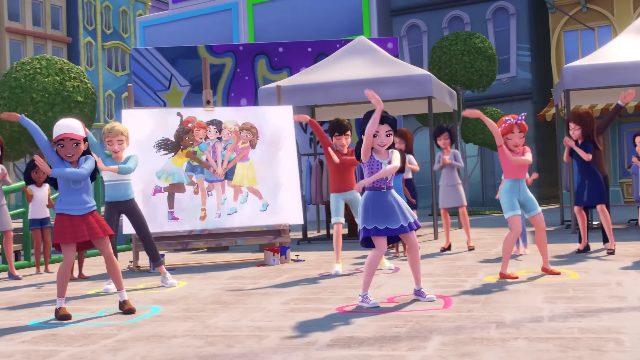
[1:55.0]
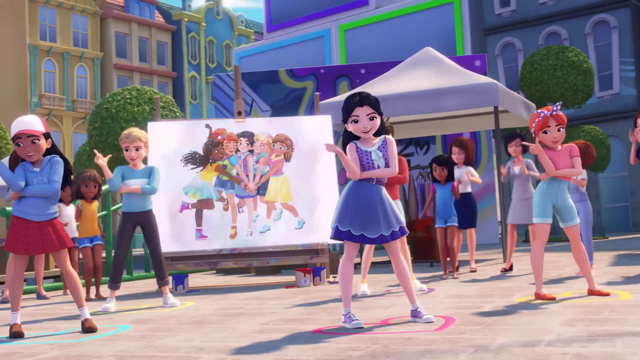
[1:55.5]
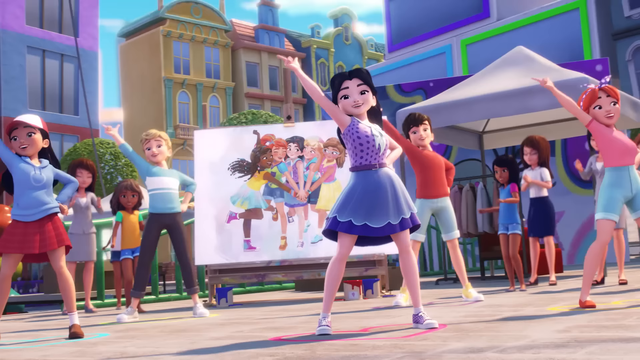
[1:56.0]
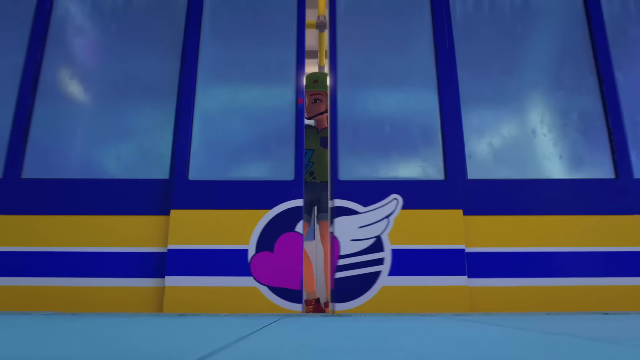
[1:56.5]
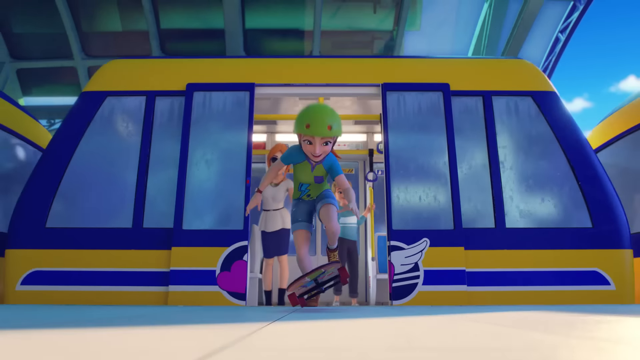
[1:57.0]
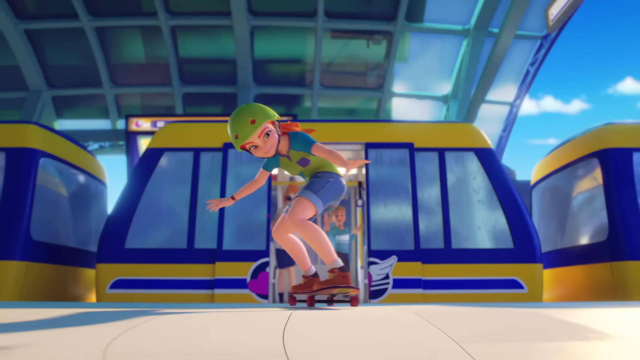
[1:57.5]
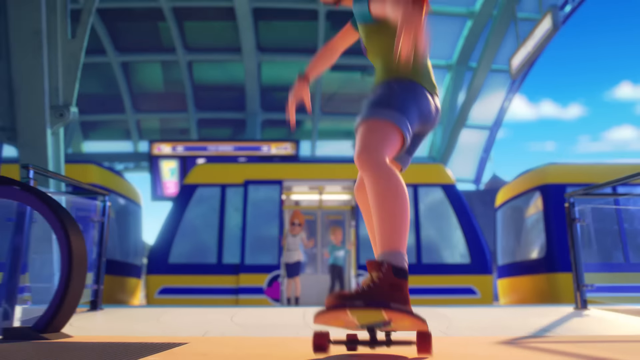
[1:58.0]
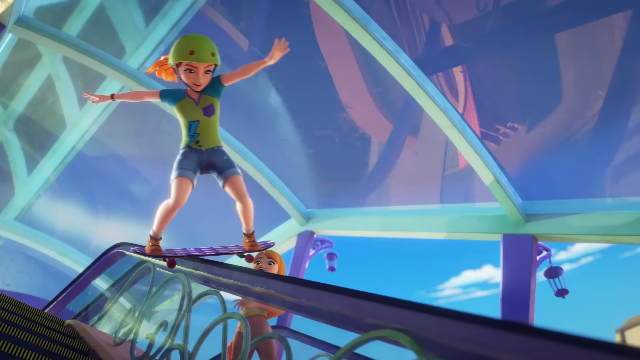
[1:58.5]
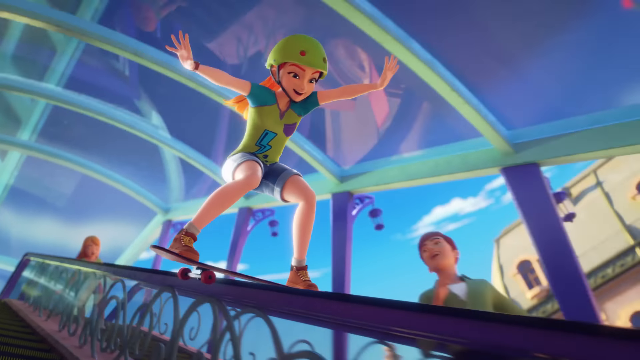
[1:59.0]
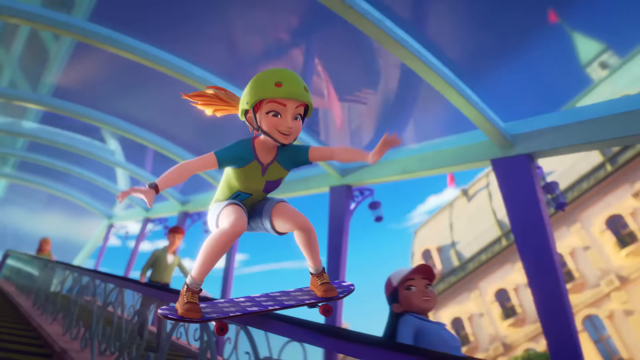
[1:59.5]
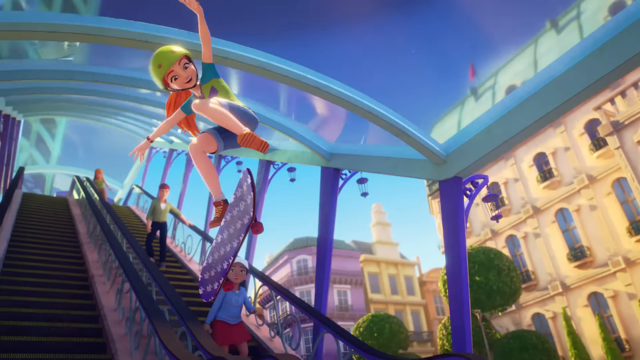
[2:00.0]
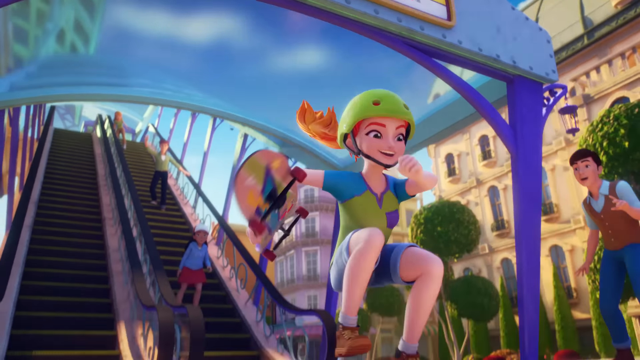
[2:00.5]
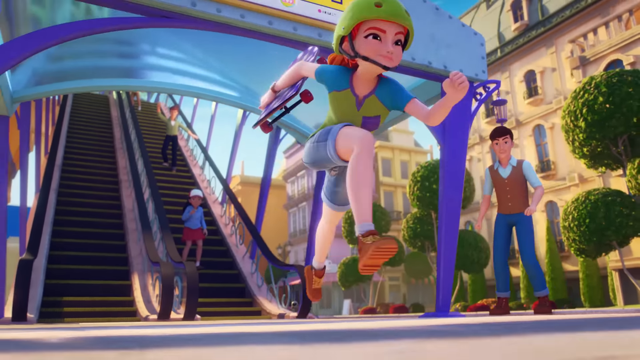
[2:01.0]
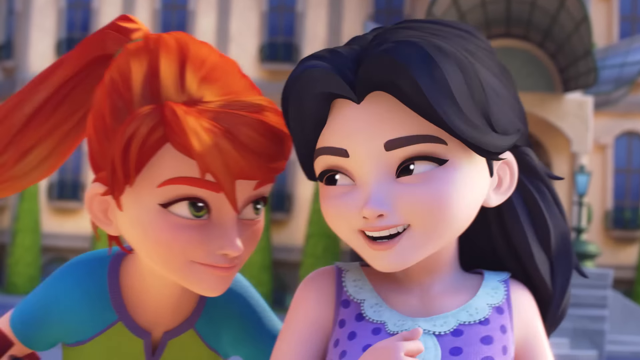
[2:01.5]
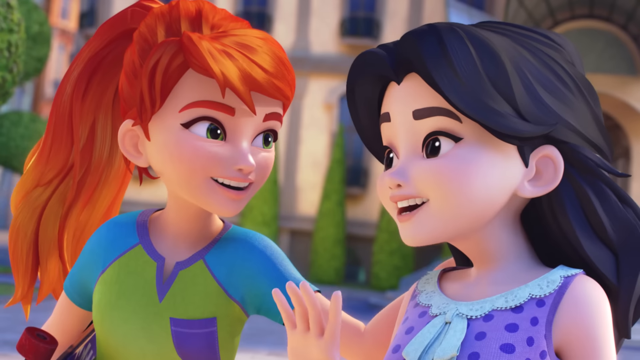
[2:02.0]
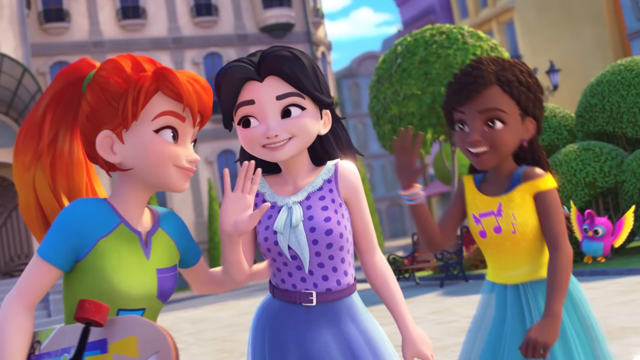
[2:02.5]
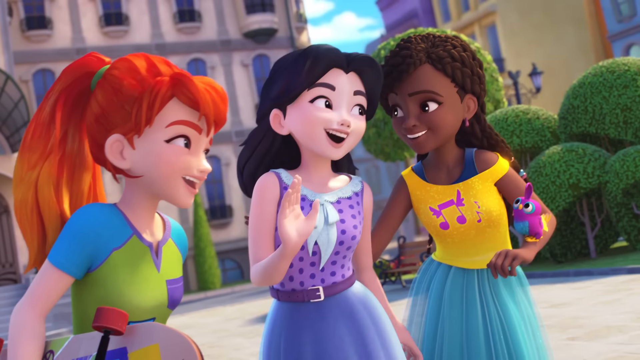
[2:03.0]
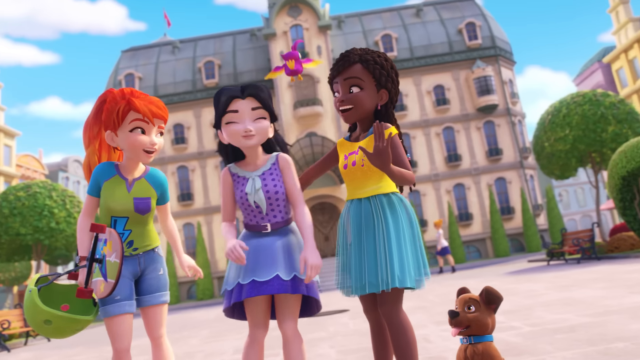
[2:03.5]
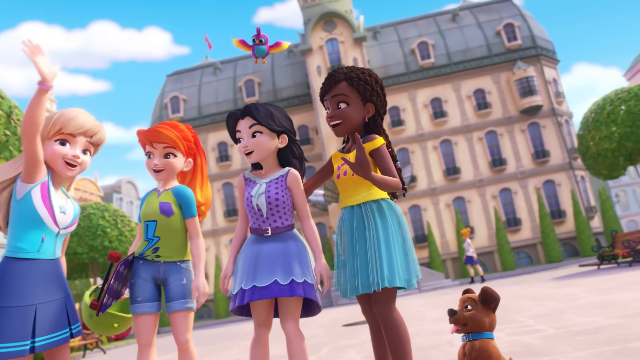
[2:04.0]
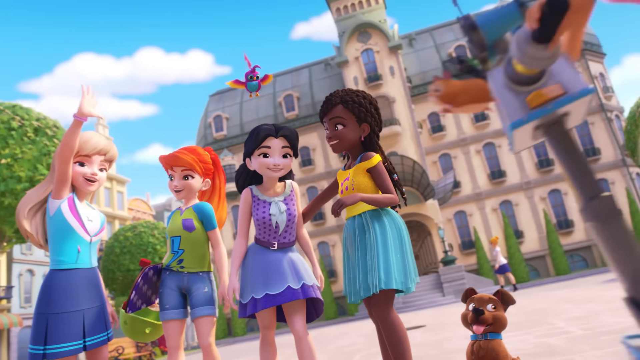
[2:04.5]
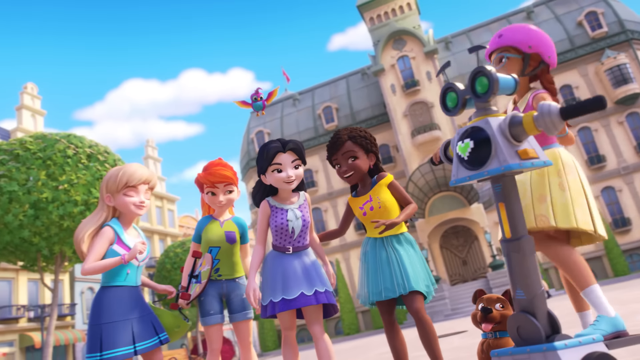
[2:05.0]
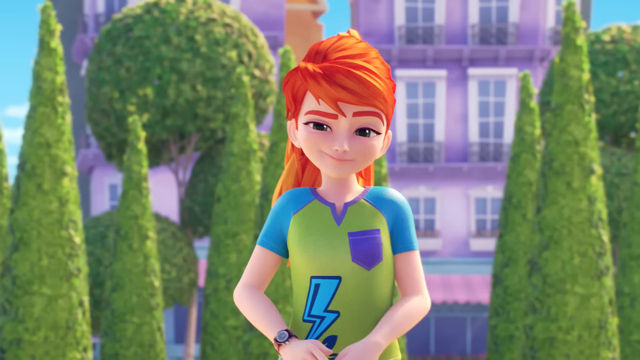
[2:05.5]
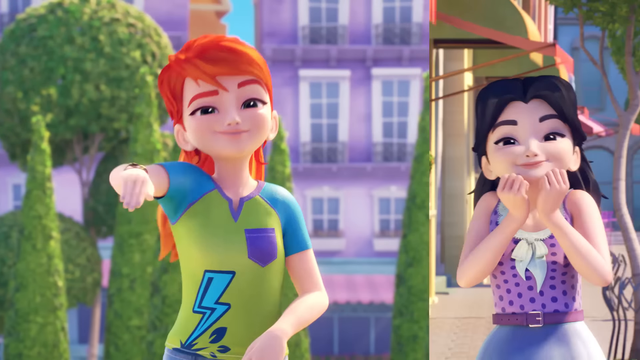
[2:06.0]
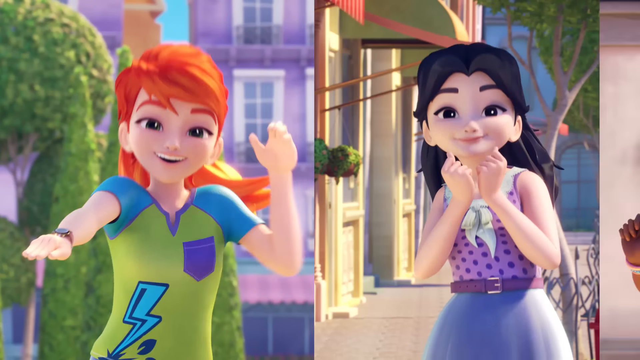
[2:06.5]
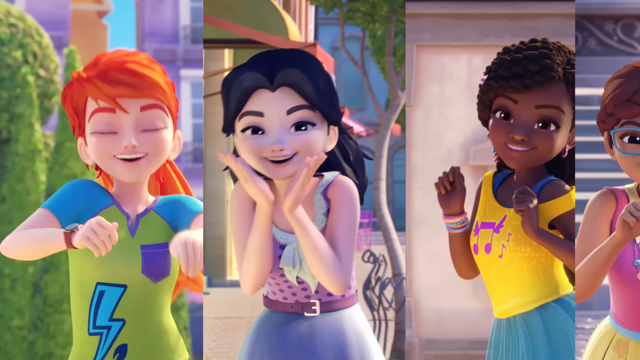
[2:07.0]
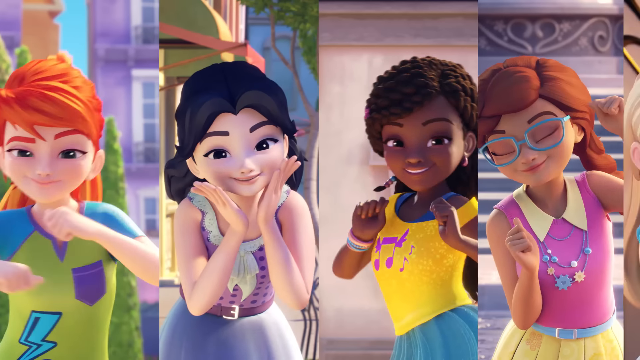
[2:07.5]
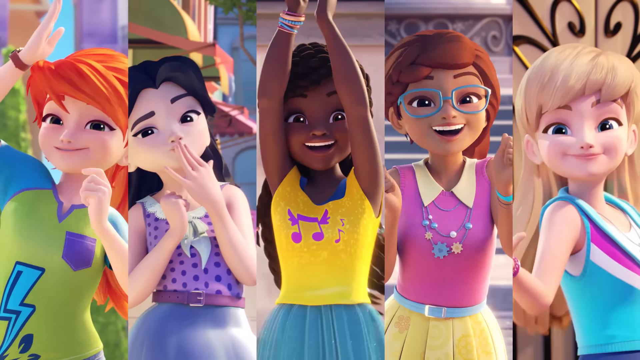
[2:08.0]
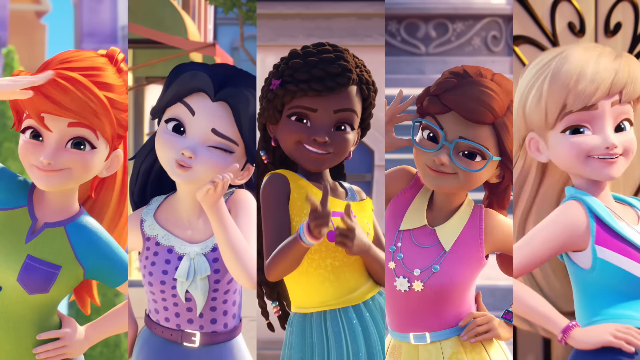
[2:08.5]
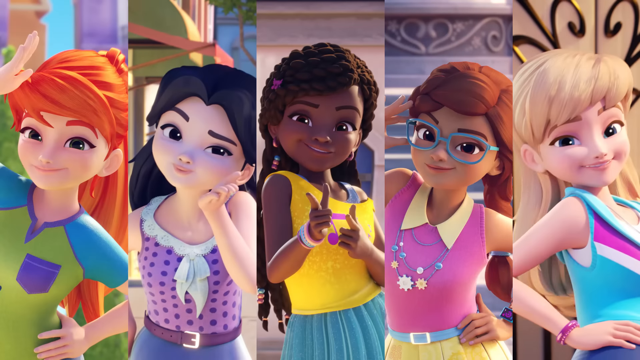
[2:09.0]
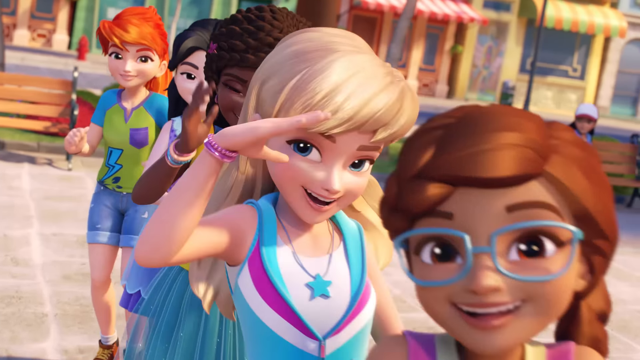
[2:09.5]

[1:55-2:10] Mia arrives at the main station in town, jumps out with her skateboard, and does a trick. She heads to where Emma is with her painting, dancing along with other townsfolk. When she meets Emma, Andrea, Stephanie and Olivia pop up and they all join the song and dance. The screen breaks apart into panels showing each of them doing a little dance, dancing and smiling.